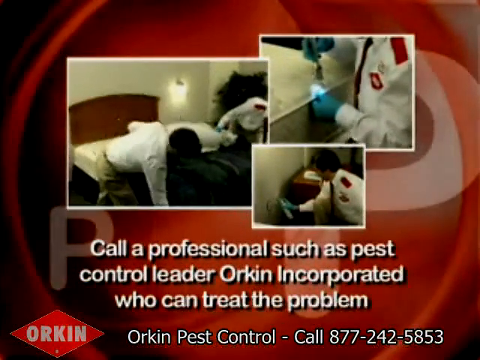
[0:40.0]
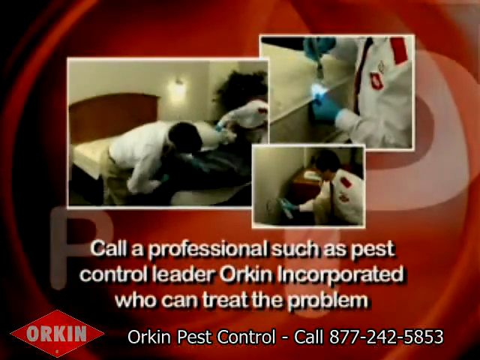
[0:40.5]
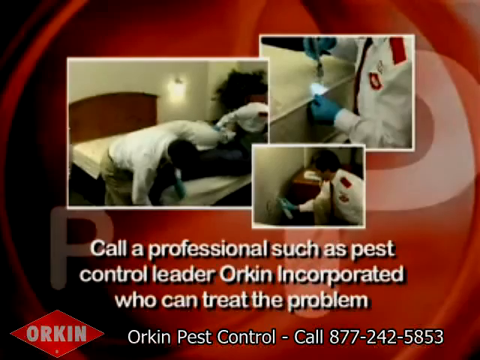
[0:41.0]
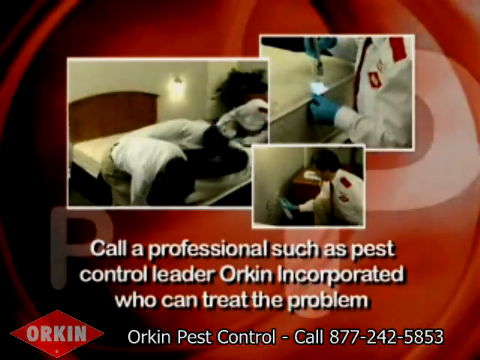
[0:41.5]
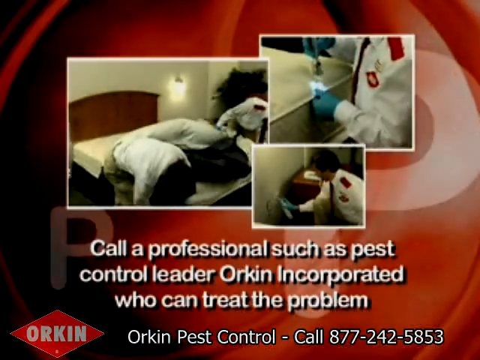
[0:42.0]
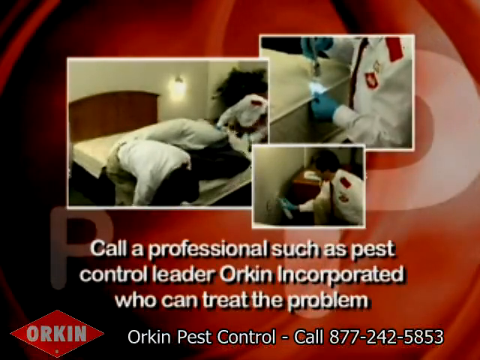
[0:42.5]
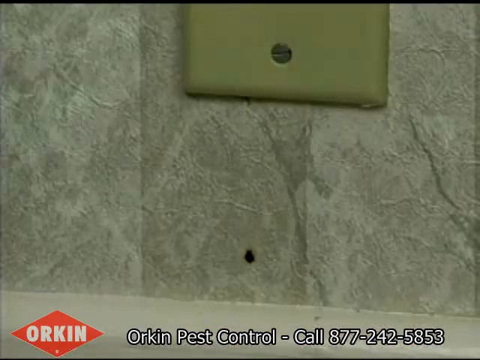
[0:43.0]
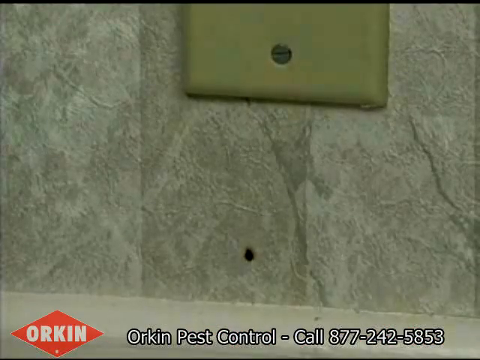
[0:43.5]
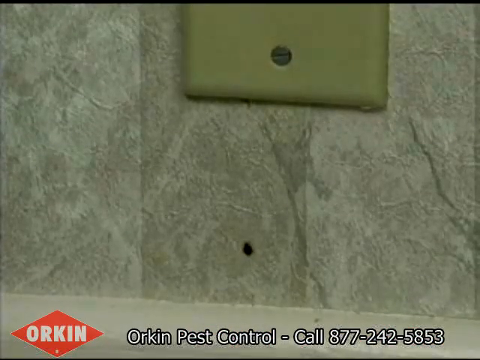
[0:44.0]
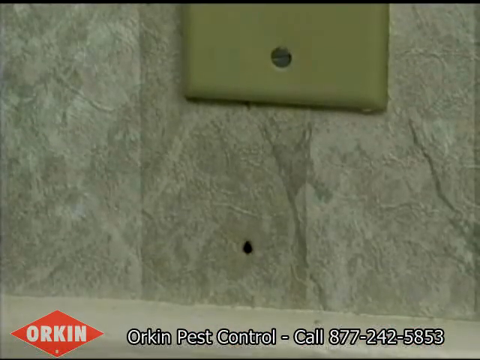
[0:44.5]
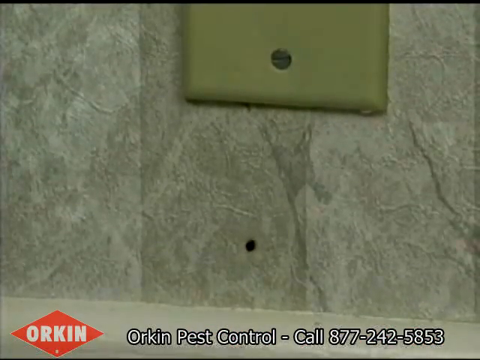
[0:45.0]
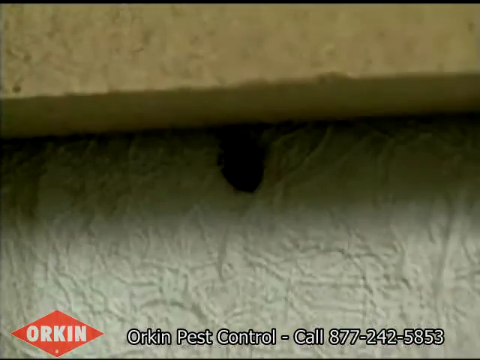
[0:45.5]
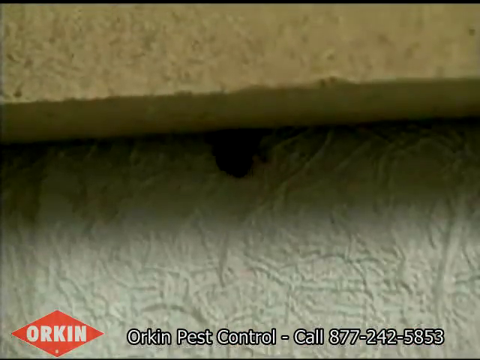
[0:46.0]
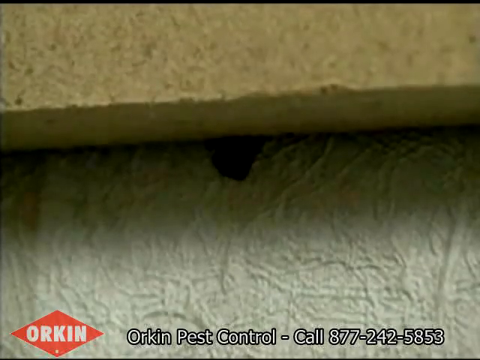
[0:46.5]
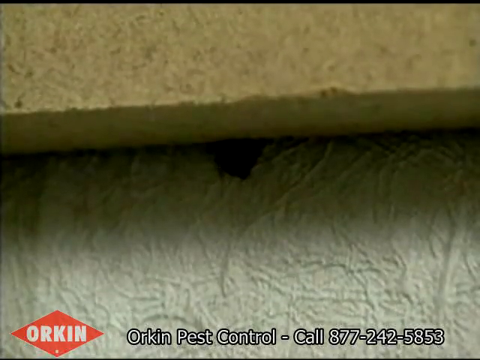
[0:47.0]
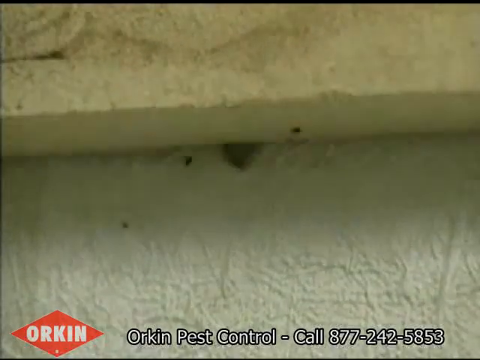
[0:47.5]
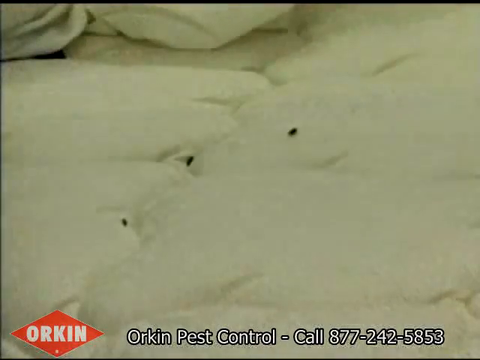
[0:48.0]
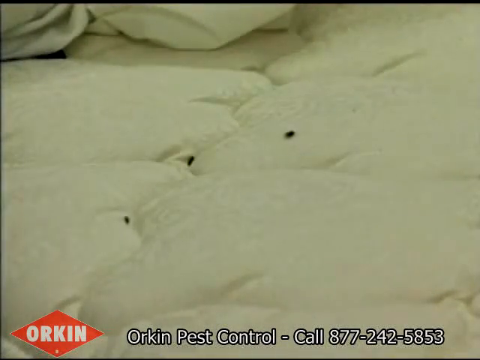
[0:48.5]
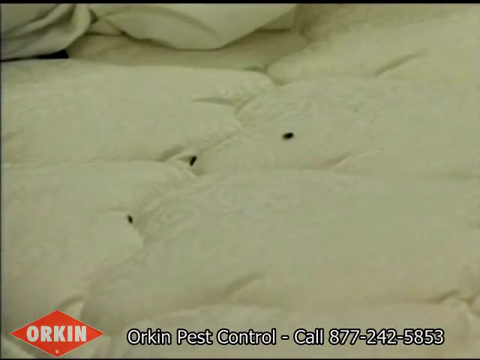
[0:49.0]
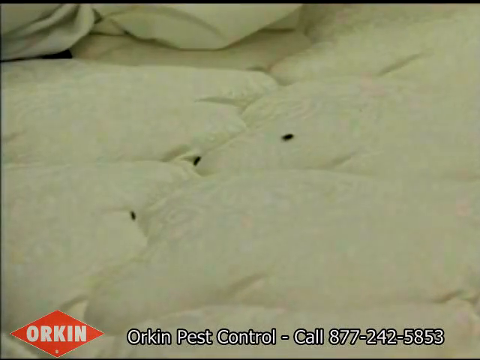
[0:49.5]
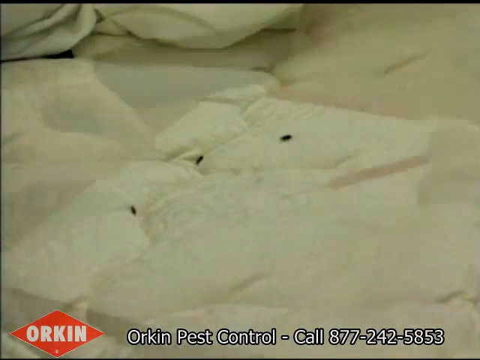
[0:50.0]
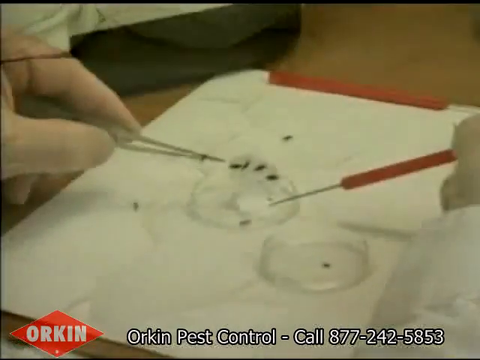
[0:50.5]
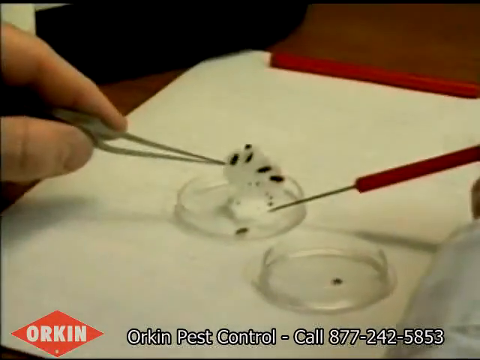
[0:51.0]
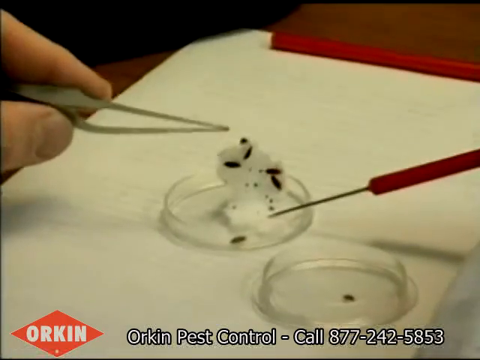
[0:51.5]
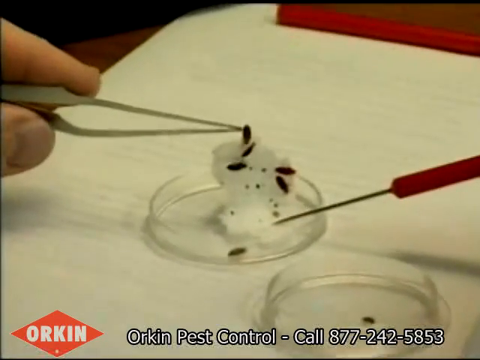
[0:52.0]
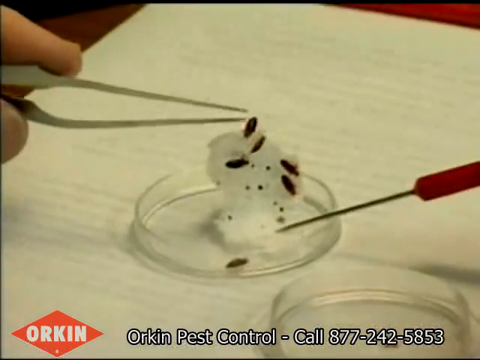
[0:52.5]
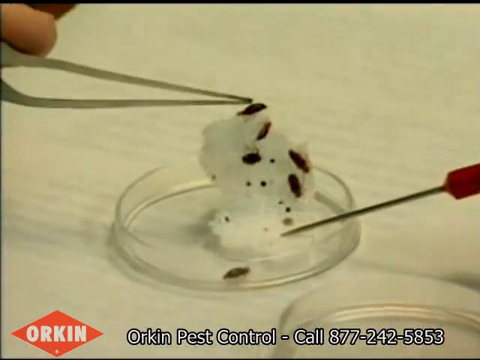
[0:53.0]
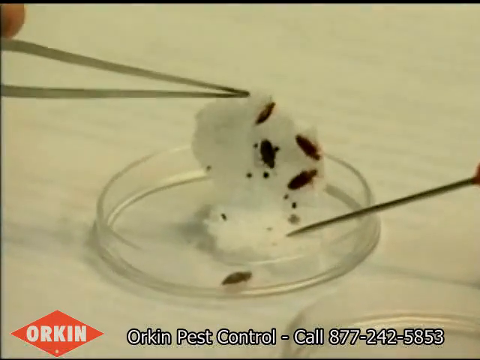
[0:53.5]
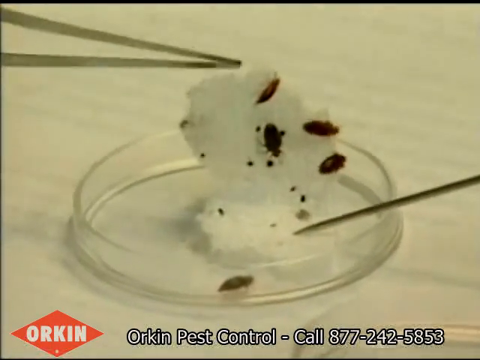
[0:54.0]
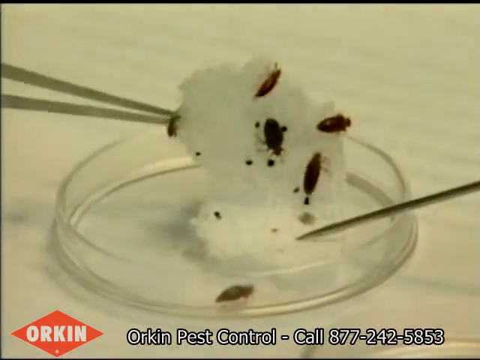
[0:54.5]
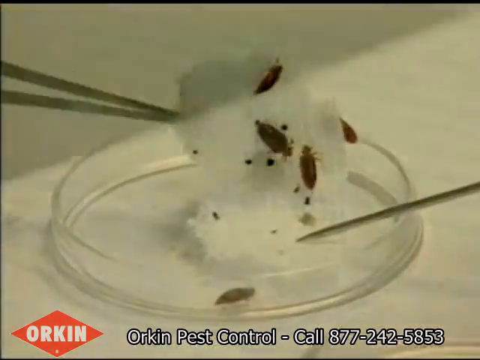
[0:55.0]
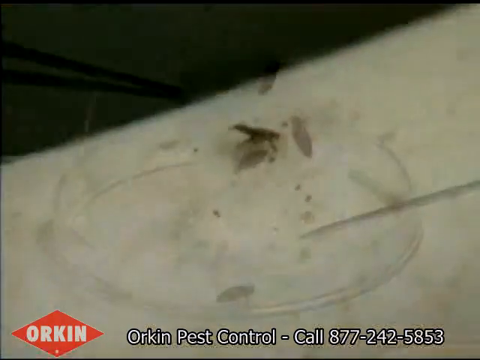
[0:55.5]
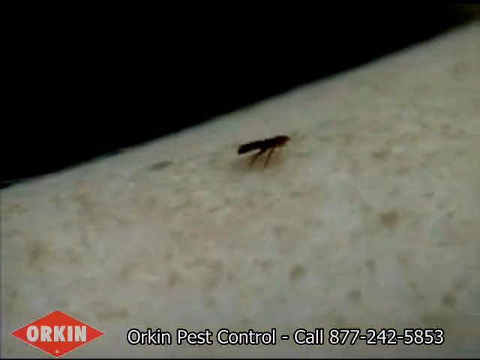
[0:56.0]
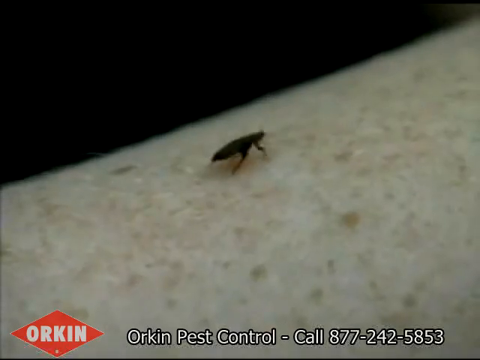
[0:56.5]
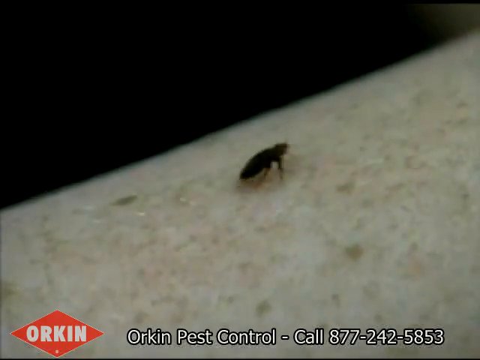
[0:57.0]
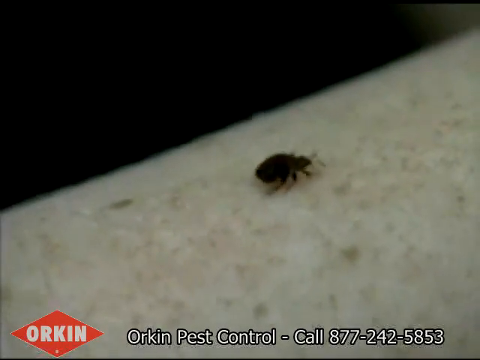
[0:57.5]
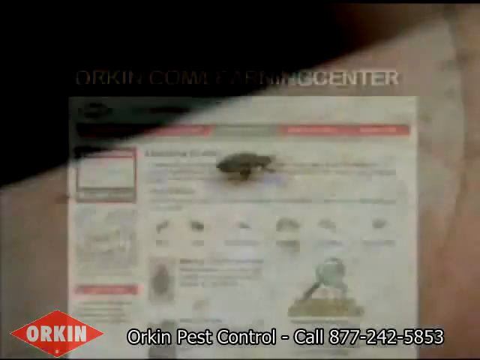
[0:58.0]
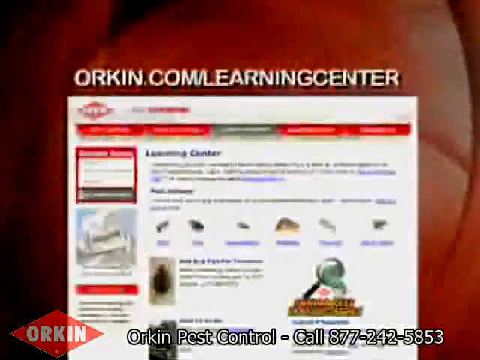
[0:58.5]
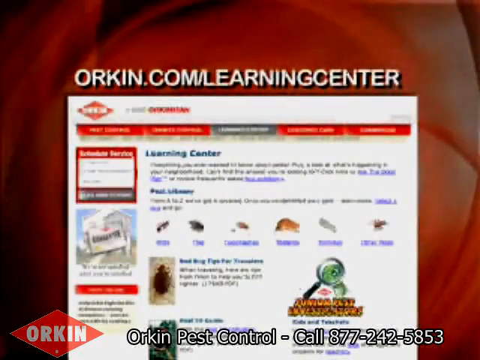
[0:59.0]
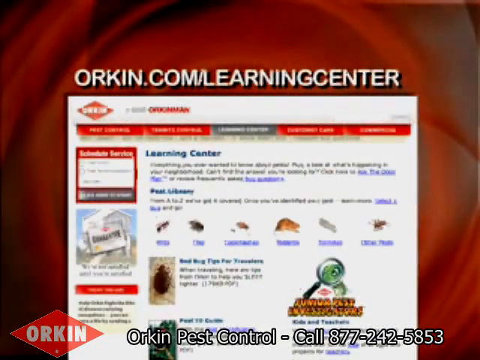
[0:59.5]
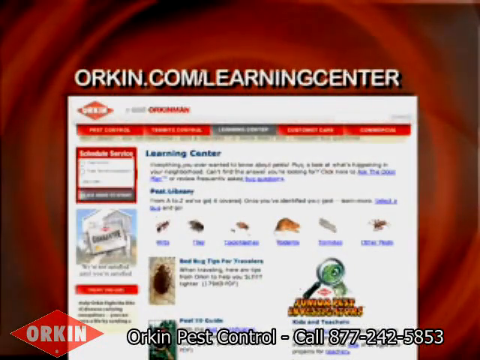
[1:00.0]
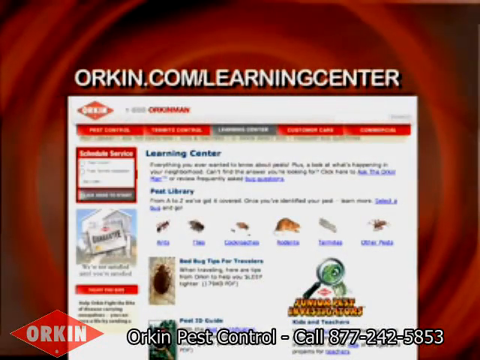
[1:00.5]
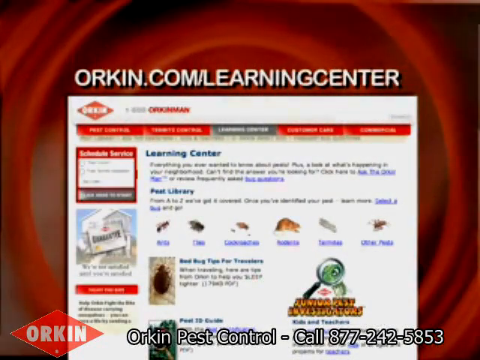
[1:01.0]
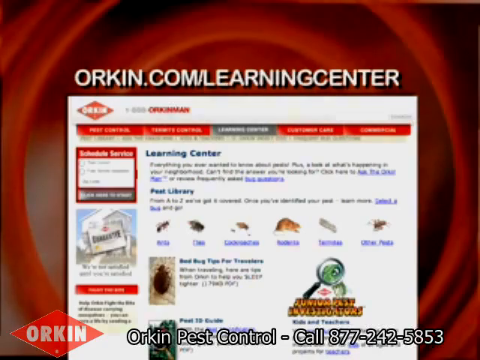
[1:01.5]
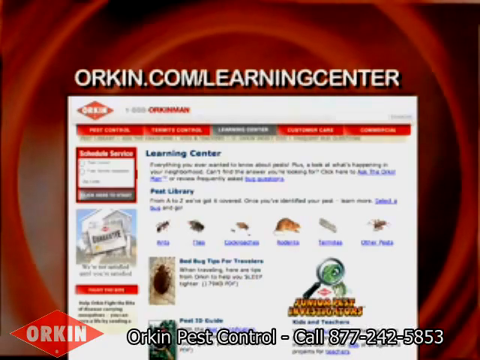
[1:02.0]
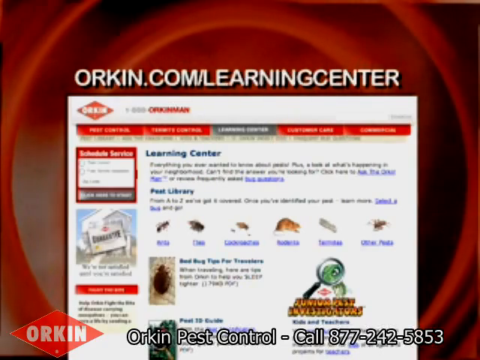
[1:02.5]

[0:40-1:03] In the top left picture, a man at the foot of the bed pulls back a dark sheet and the mattress and looks down. Another man, wearing a glove, runs his left thumb along the lip sticking out from the edge of the mattress while holding a flashlight in his right hand and looking down at the spots. Next, a single bug crawls up a wall with a light switch above it; the wall appears to have a bubbled edge running vertically to the left of the light switch. The bug crawls up and tucks under something, out of view. In another shot, someone appears to be using a test sample, a little round glass item, with tweezers to study something on a small white piece of material. Toward the end, a learning center from the Orkin website is shown, with a pest library containing links to different insects.